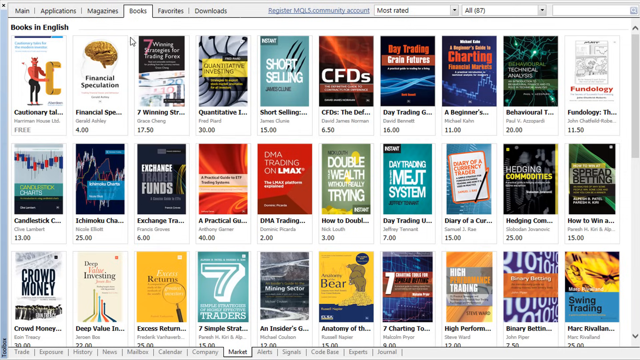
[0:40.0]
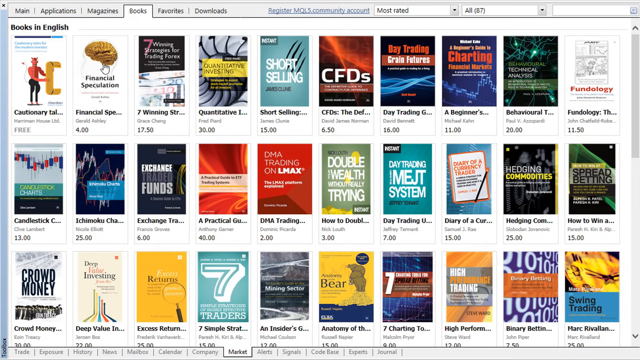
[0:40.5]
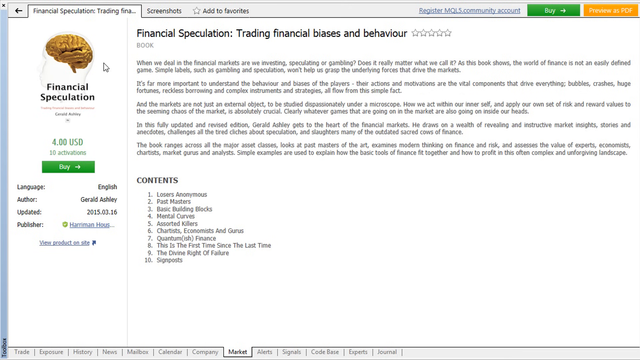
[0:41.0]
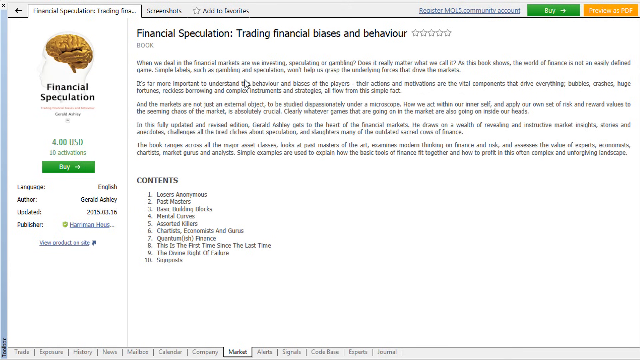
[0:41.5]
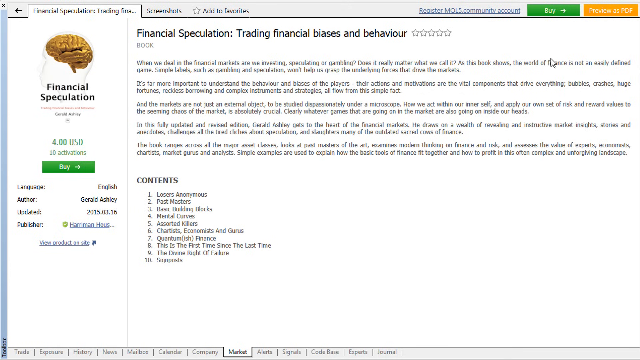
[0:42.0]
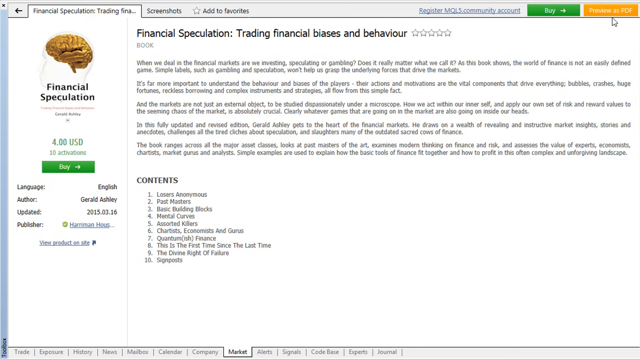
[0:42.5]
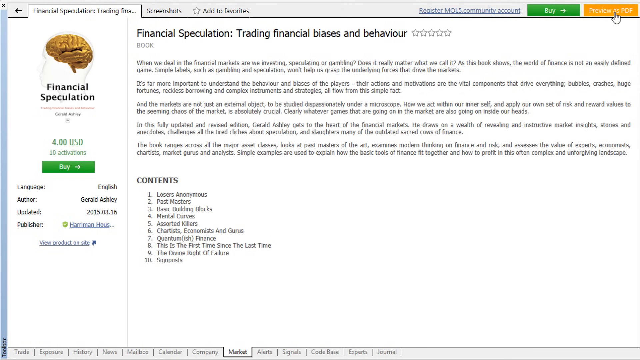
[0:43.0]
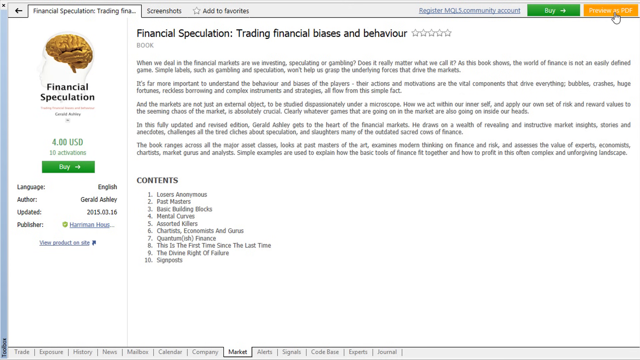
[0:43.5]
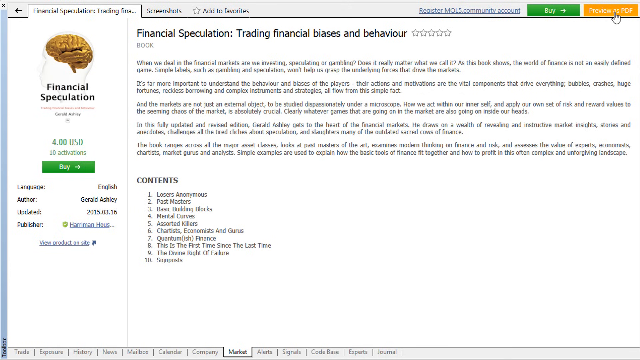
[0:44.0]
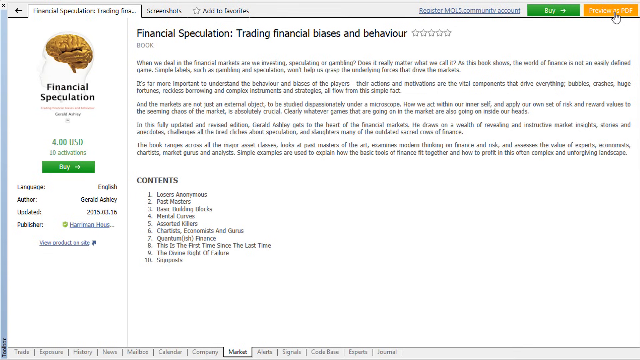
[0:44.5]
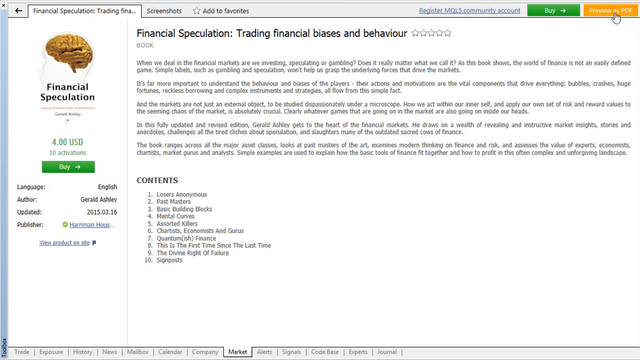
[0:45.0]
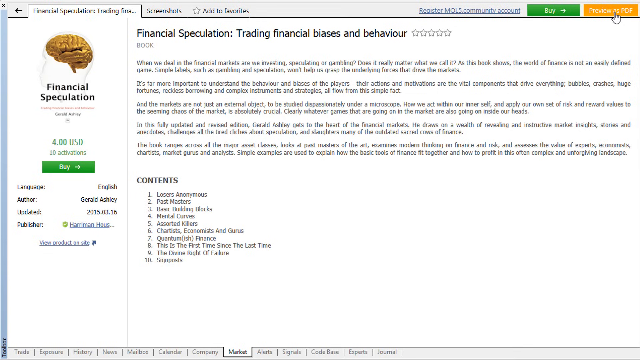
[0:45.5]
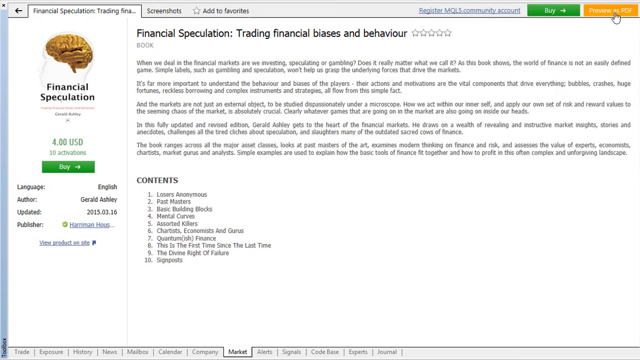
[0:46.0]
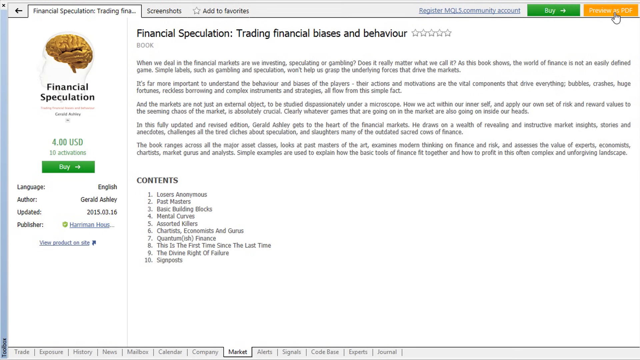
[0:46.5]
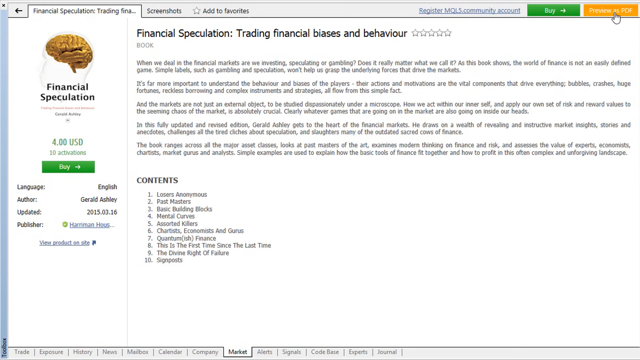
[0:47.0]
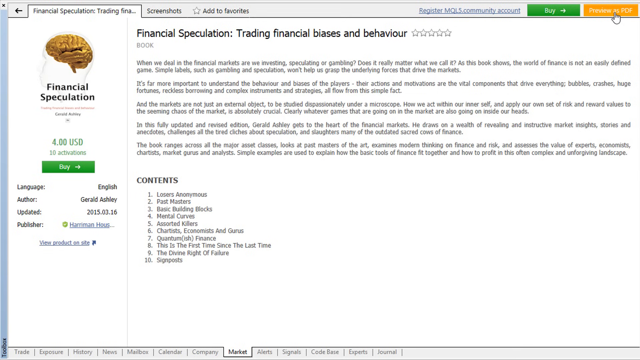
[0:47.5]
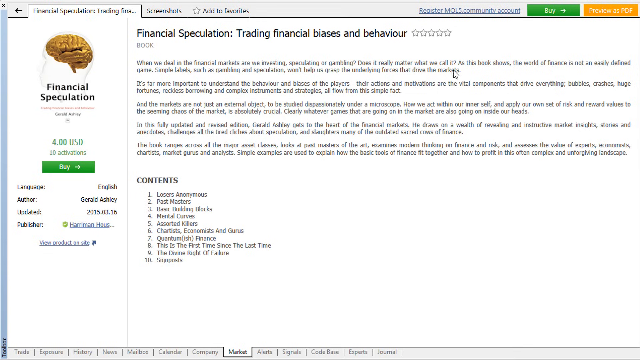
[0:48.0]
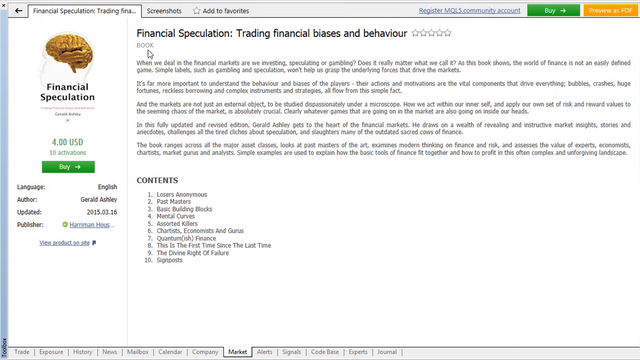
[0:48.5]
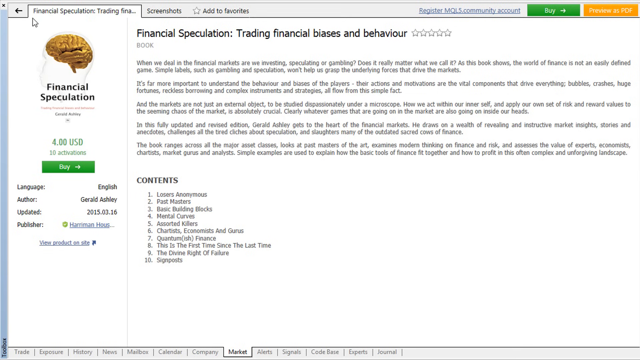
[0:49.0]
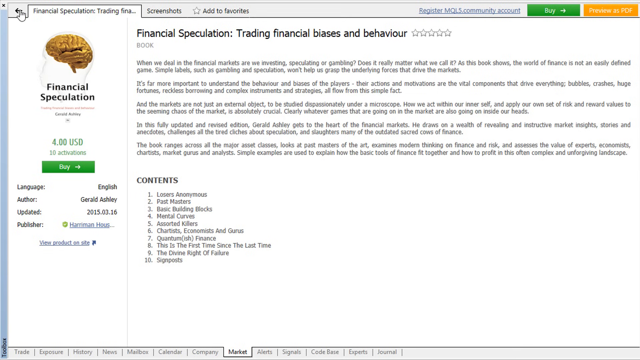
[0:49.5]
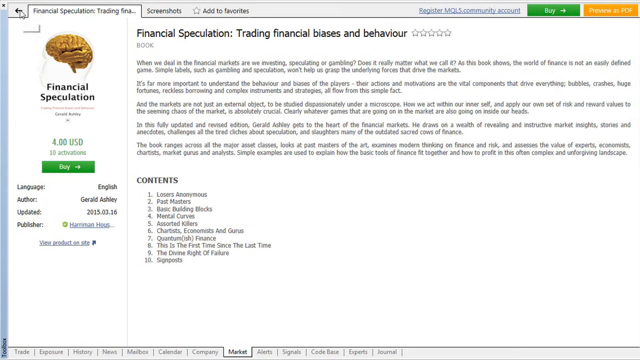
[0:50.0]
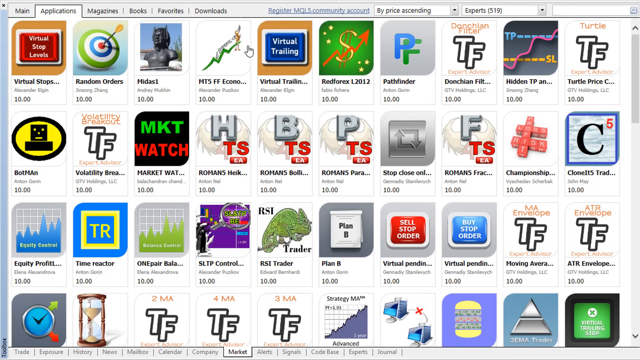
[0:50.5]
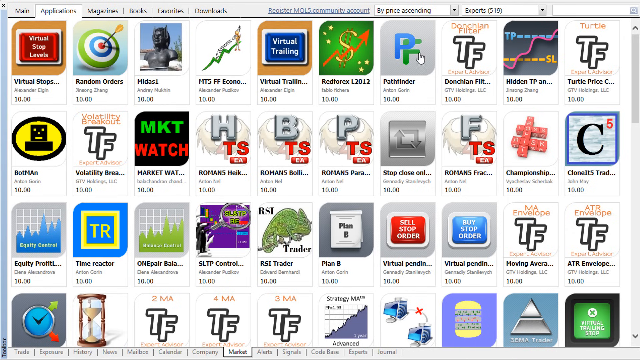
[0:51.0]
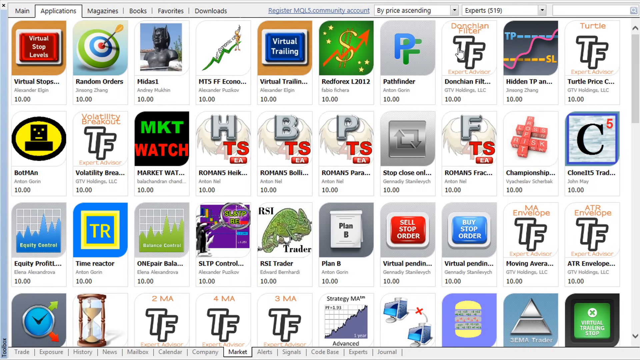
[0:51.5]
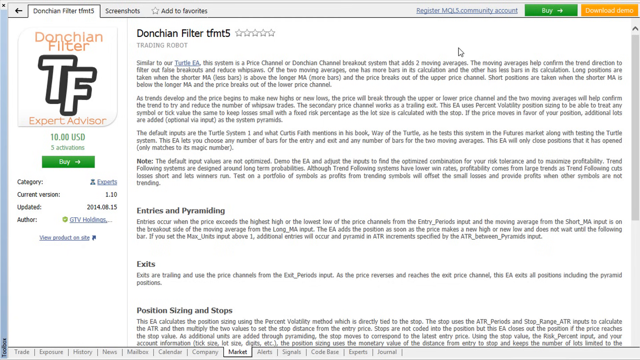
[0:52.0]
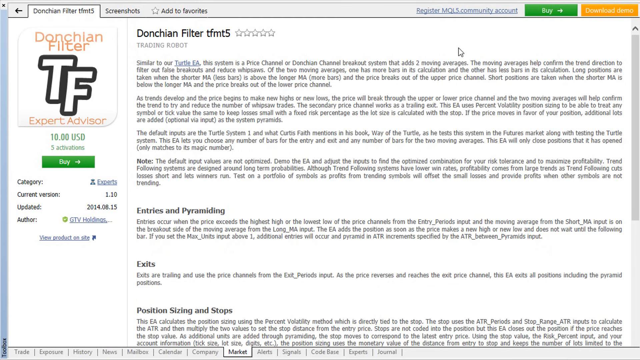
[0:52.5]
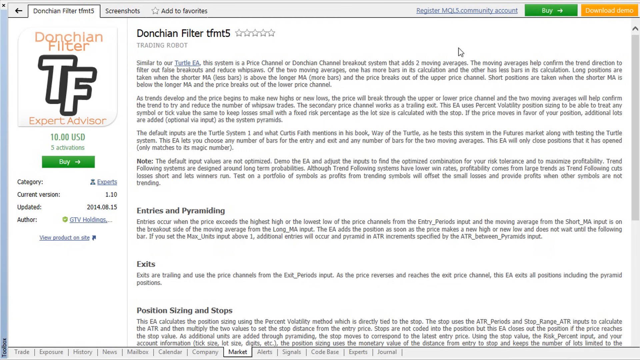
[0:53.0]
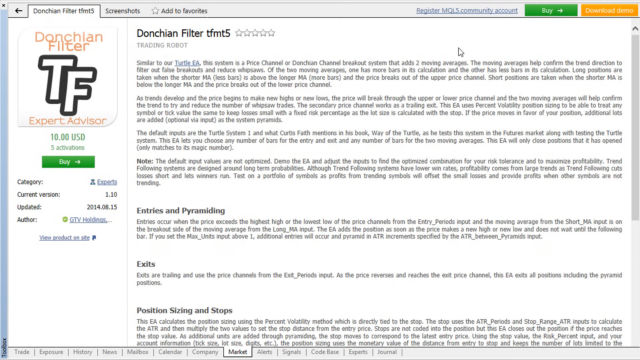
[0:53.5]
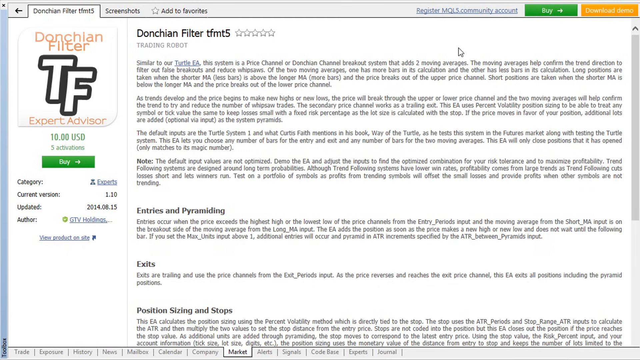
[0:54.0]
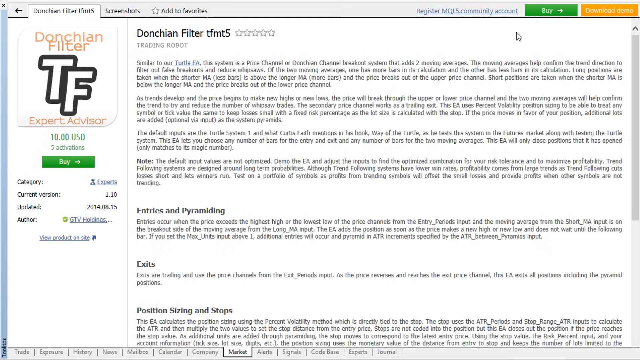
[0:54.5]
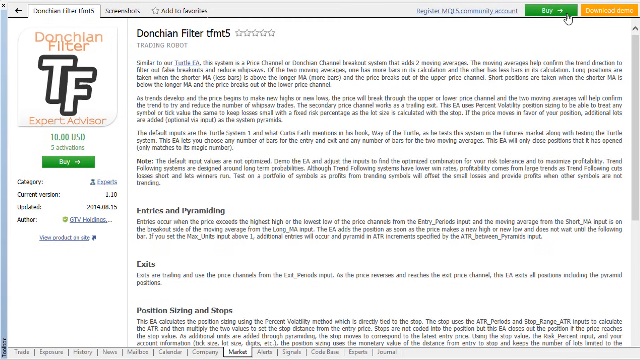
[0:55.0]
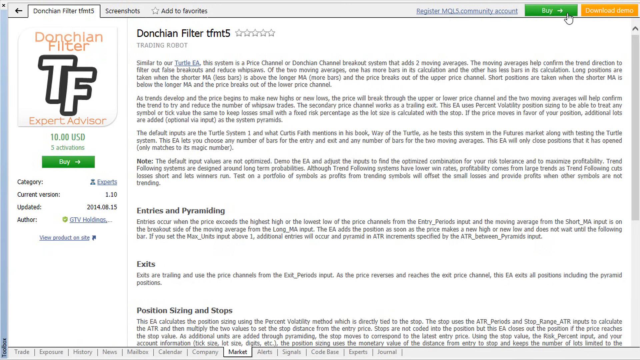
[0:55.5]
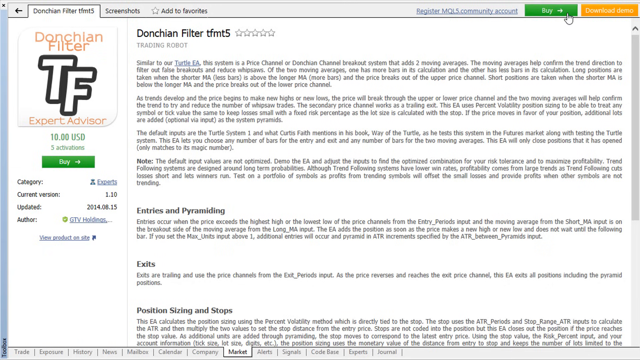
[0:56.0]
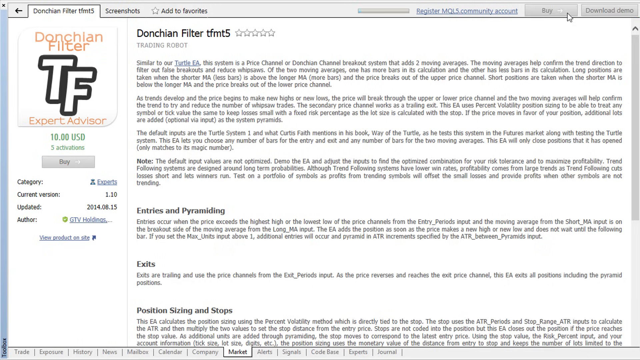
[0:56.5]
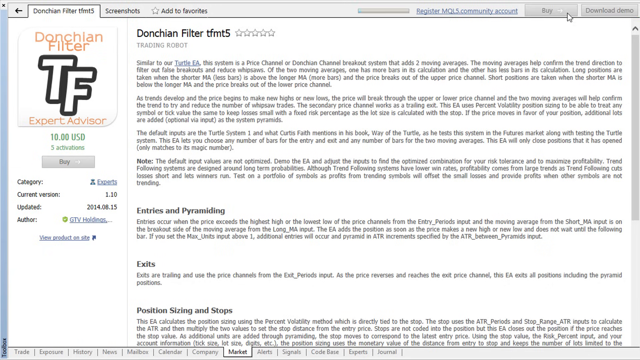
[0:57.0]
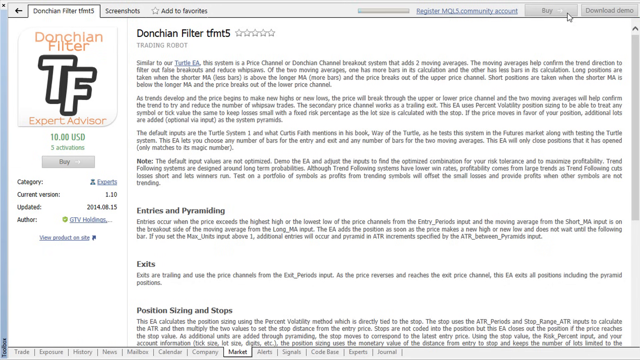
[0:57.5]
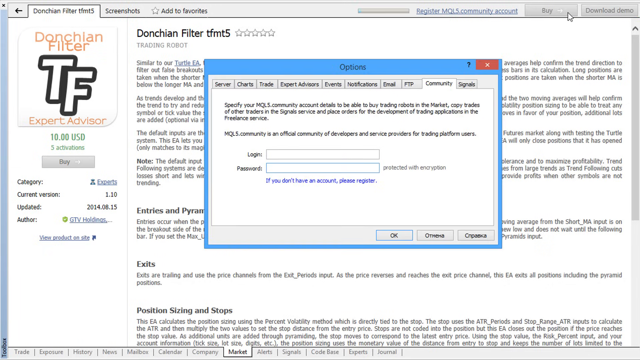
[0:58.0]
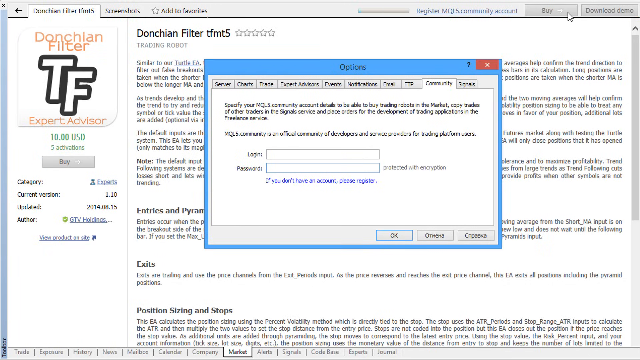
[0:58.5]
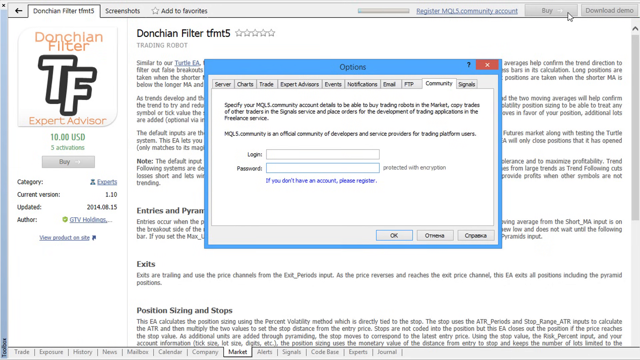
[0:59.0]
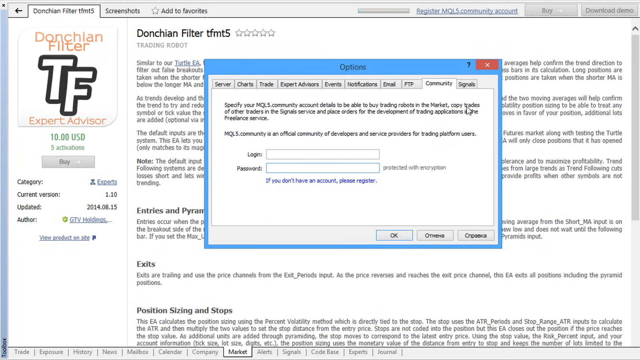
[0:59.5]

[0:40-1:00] After the Books tab at the top left of the open window is clicked, 40 different book titles are available. One called financial speculation is clicked, and its title at the top reads "Financial speculation trading financial bias and behavior". The book is not rated and has no stars. The mouse cursor goes over to the top right corner, where a button says "preview as PDF", but it is not pressed. Instead, the cursor goes all the way to the left corner and clicks the Back button. Another book, called Donchian Filter, an expert advisor, is clicked. The cursor moves to a buy button in the top right corner, and a window opens in the middle prompting for a login and password.